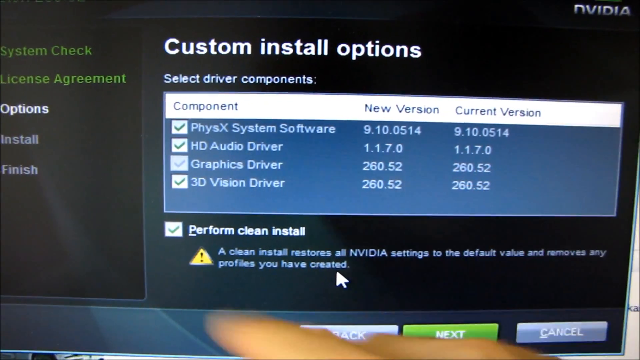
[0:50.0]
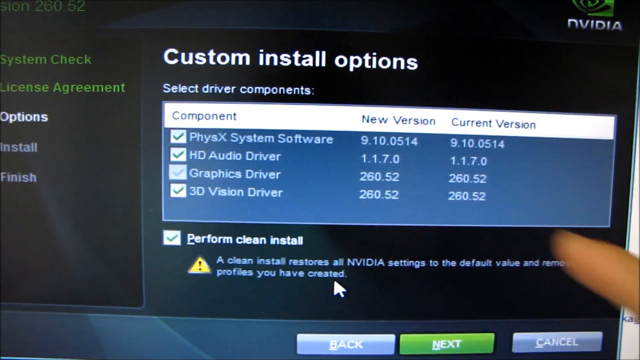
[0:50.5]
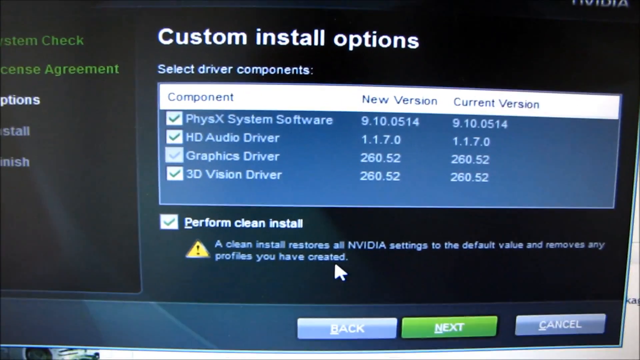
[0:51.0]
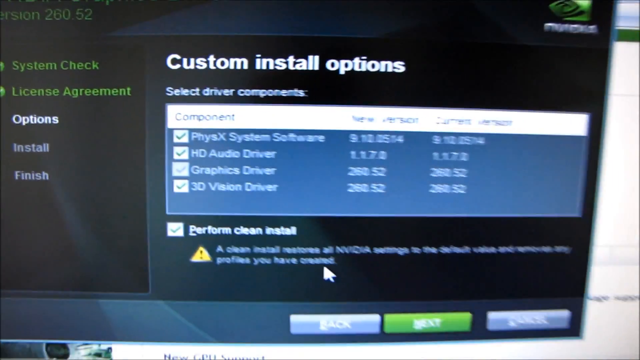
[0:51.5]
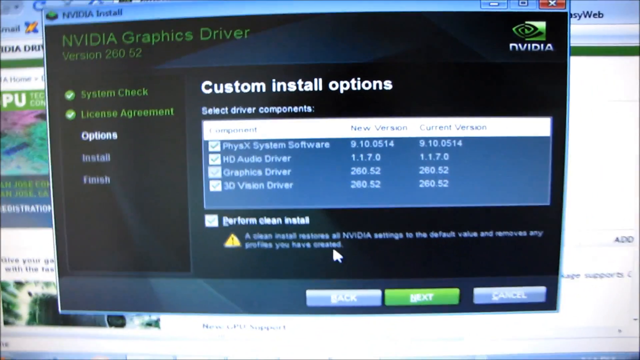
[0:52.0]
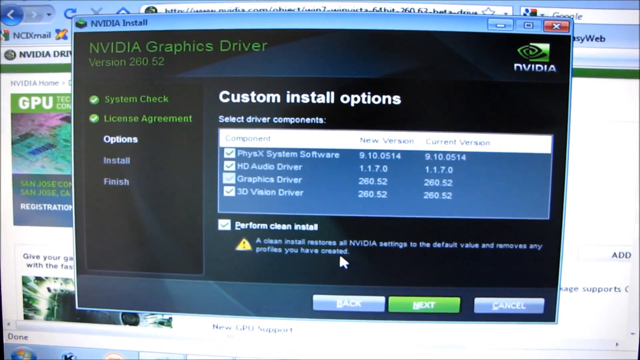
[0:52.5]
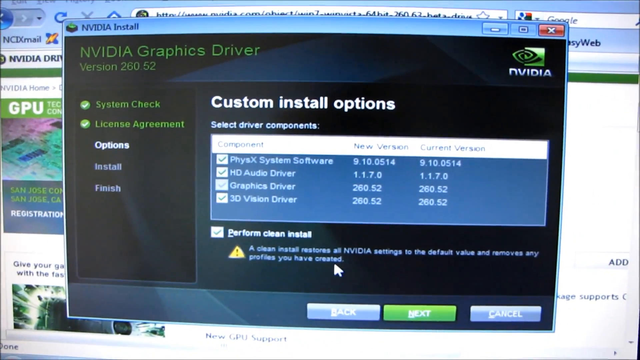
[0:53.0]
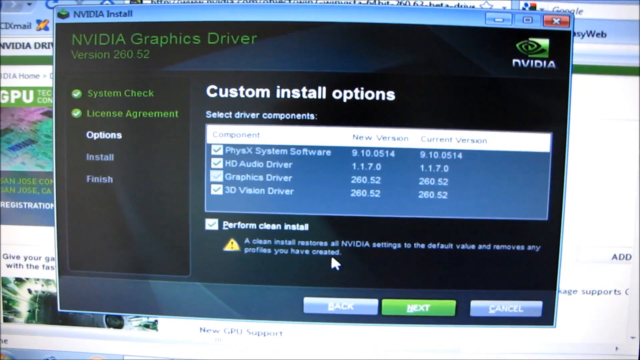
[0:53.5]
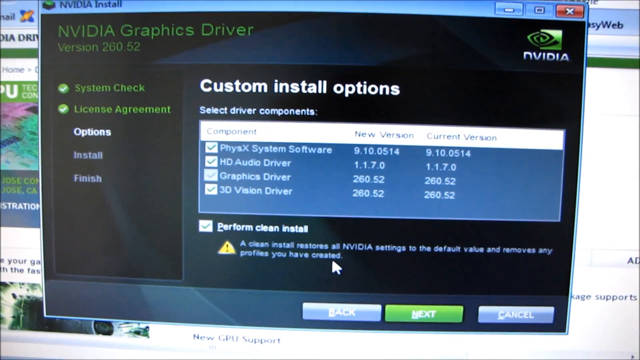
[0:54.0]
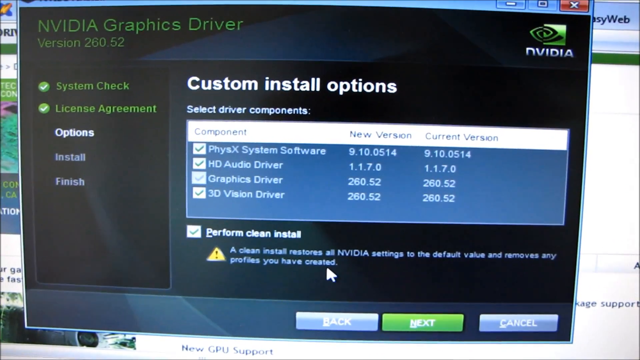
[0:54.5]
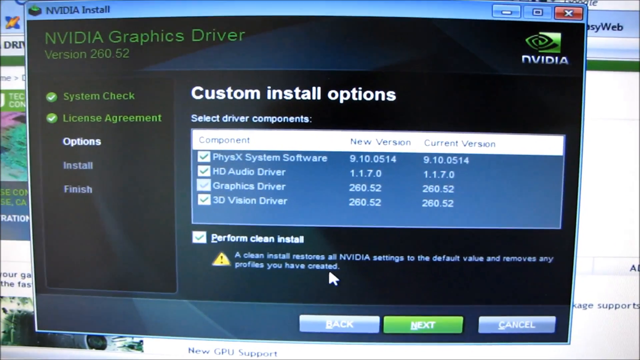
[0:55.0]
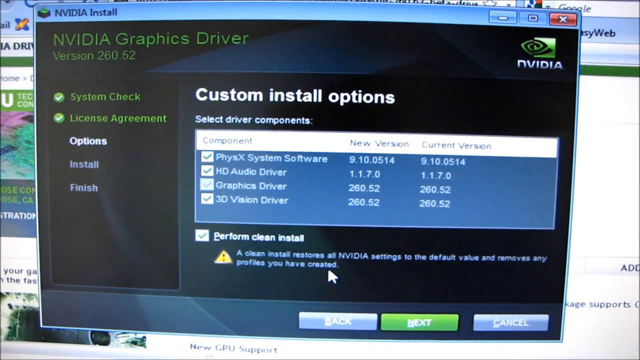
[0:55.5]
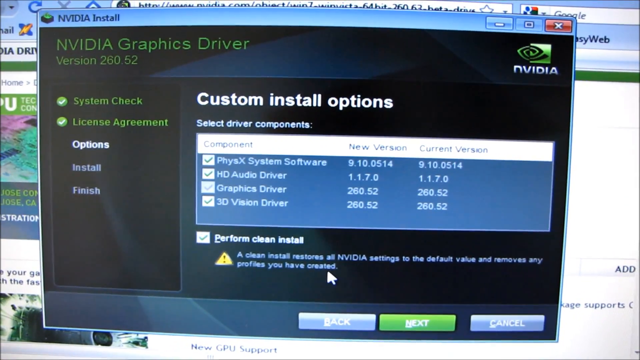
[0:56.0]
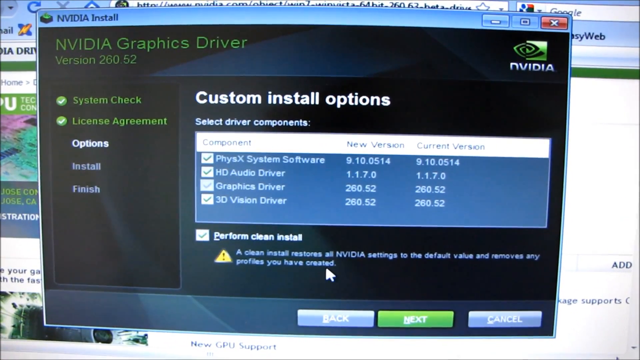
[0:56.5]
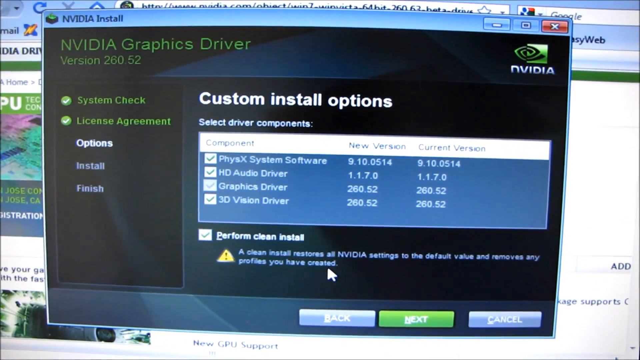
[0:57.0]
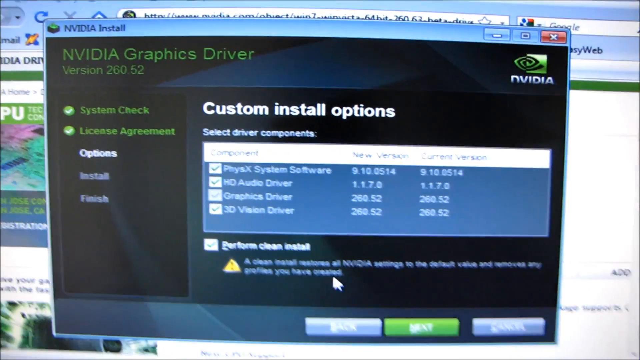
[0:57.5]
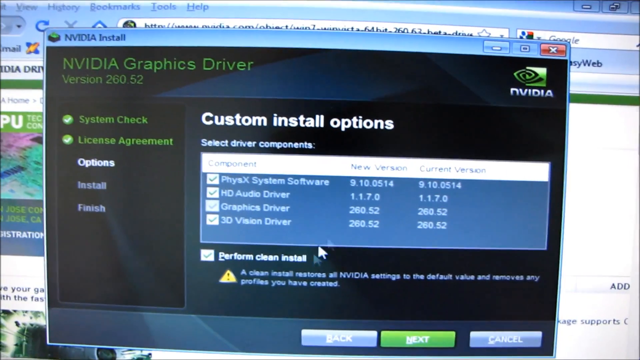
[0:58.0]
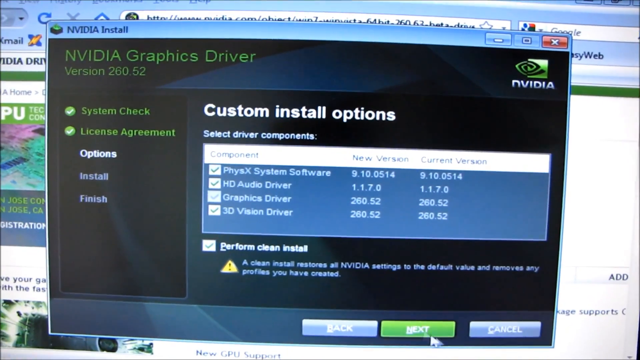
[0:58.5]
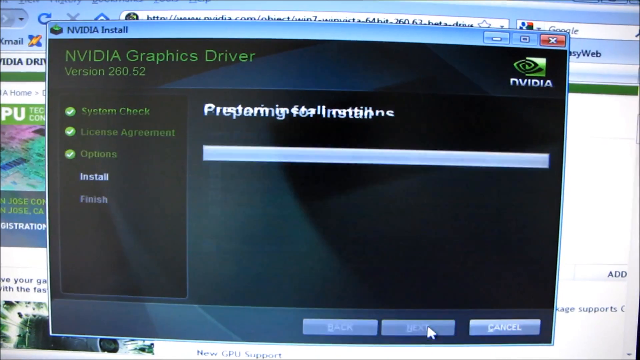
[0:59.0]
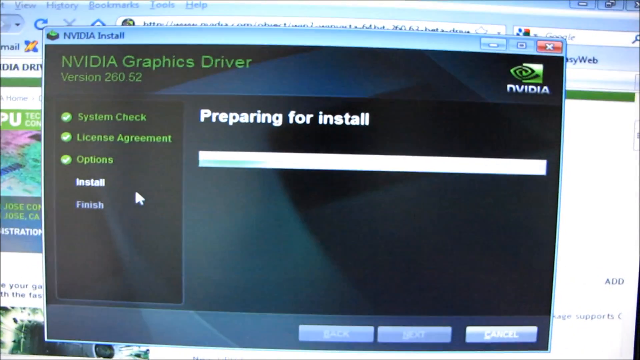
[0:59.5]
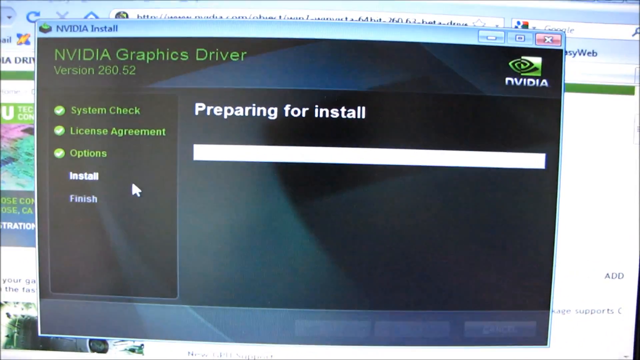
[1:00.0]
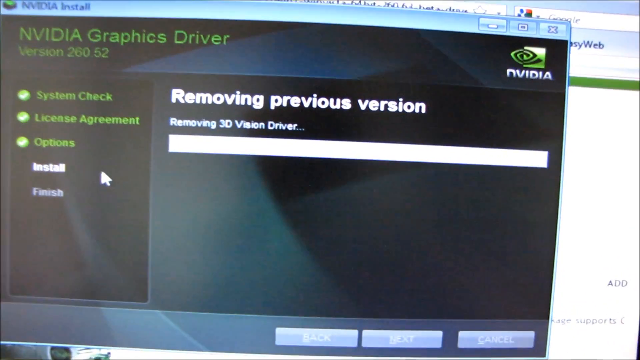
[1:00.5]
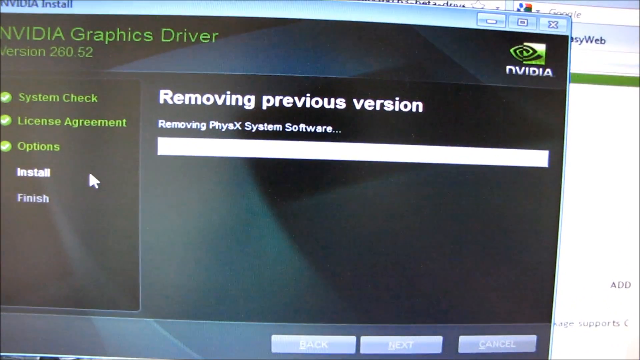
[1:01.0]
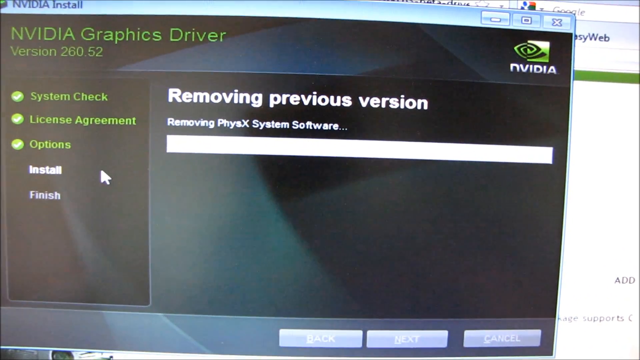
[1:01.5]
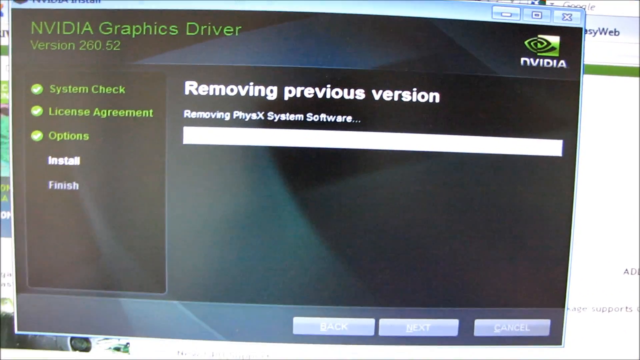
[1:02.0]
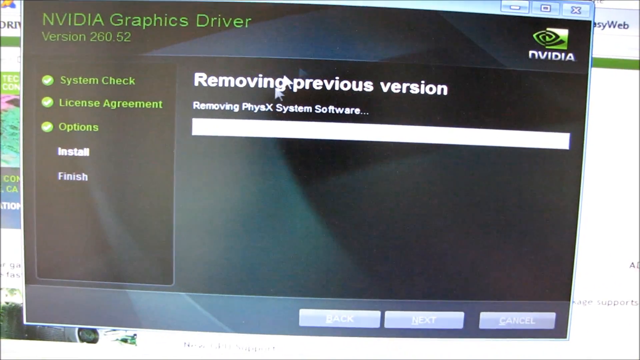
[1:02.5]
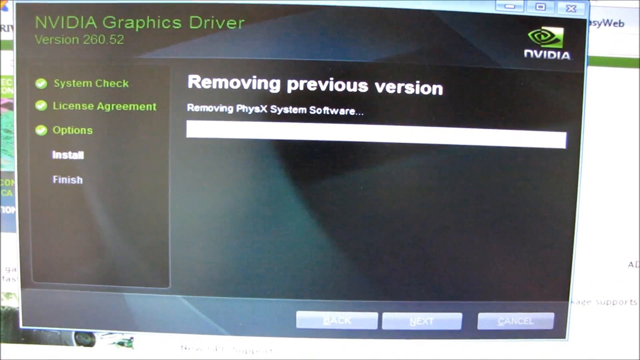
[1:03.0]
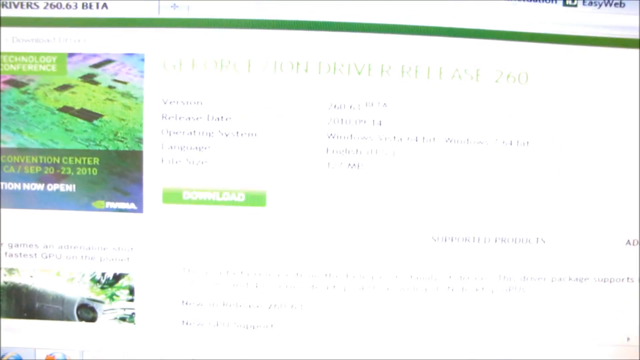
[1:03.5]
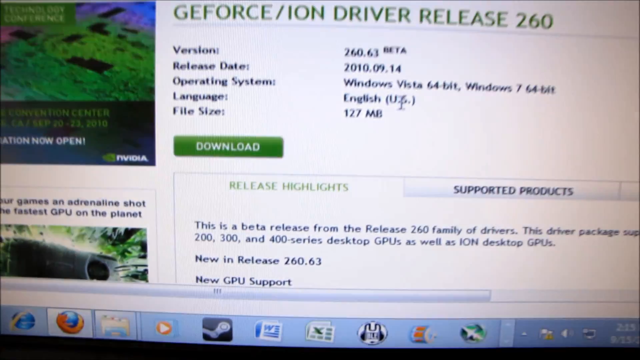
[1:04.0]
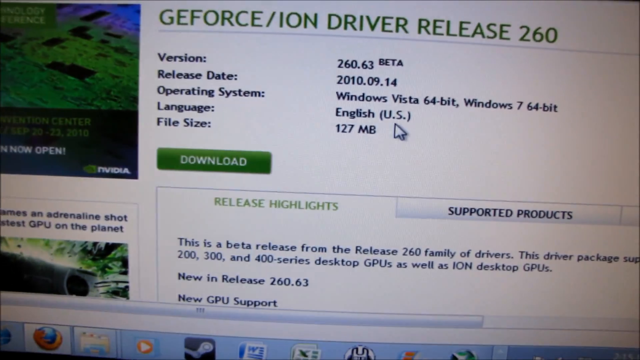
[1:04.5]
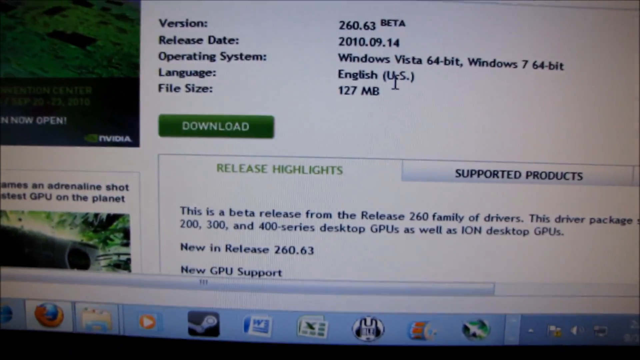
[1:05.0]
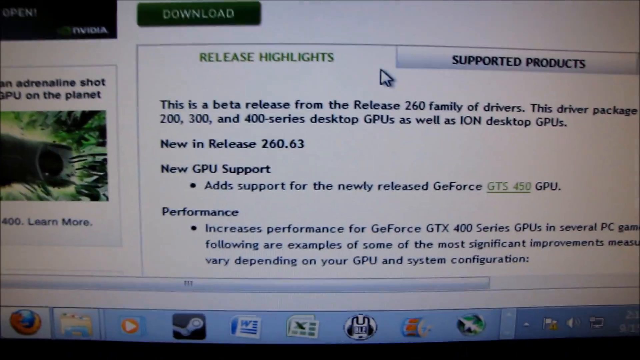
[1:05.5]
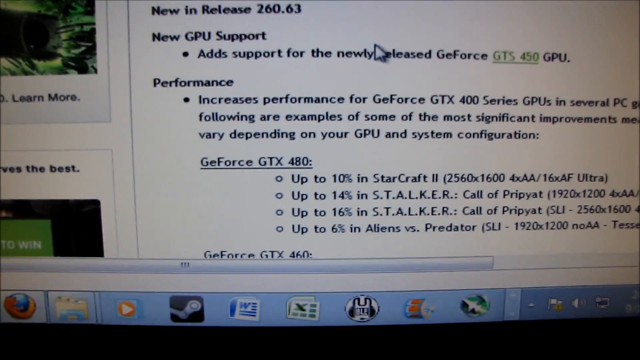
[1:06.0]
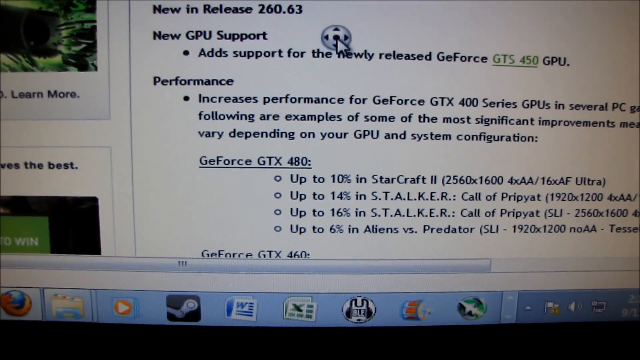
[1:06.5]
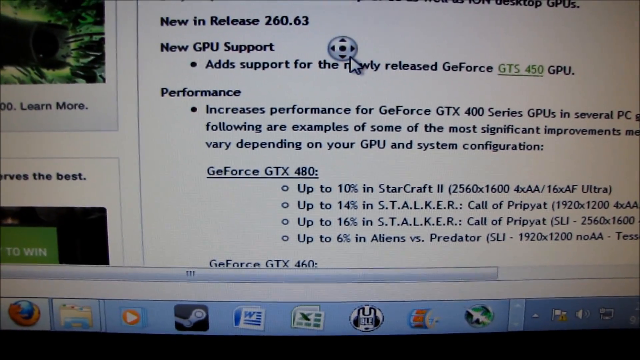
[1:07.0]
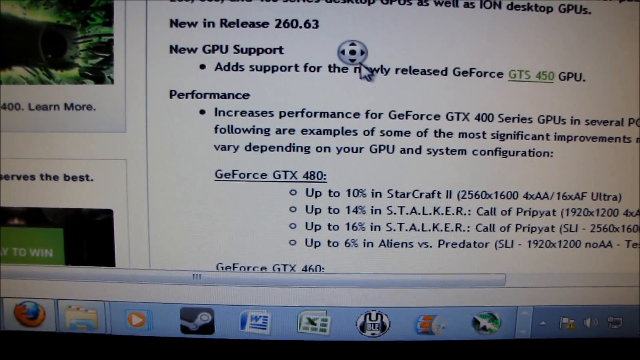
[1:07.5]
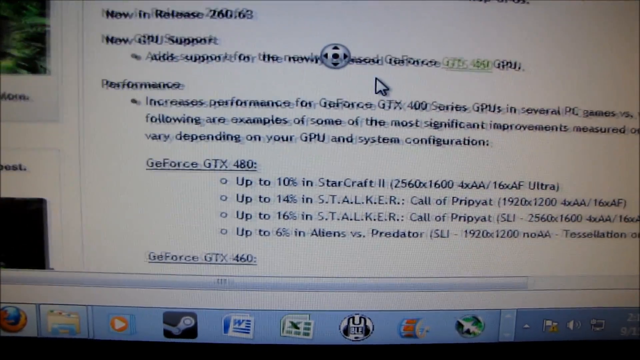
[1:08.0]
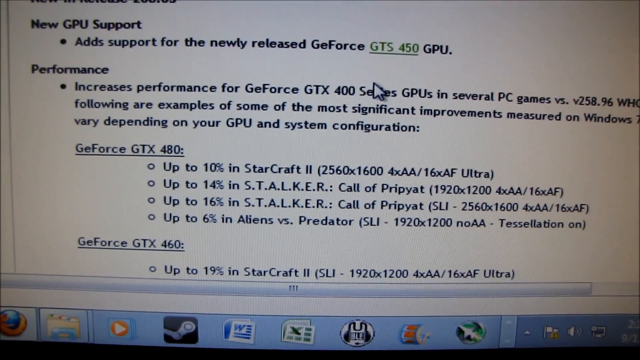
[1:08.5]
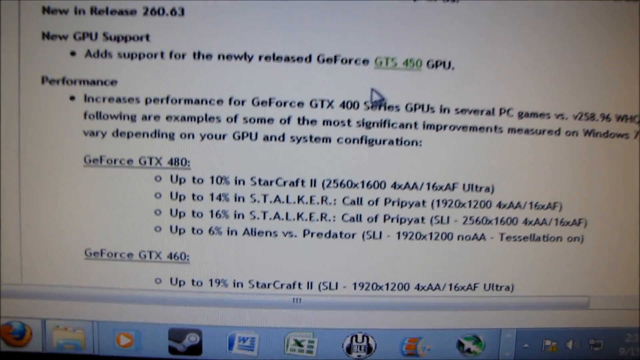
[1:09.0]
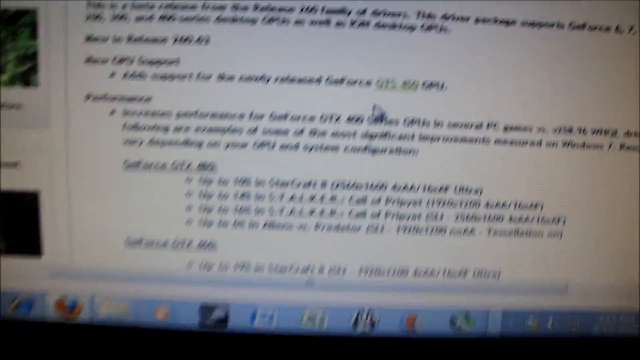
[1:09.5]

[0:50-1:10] The user's right hand gestures toward the custom install options window. The camera zooms out, no longer focused on the four options. He moves the mouse cursor to the next button and clicks it, bringing up a page that says "preparing for install" with a progress bar that is all white at first and then moves quickly. The installer moves on to removing the previous version, removing the PhysX system software. An NVIDIA logo is in the top right: a green square with a green and black swirl pattern above the white letters "NVIDIA". After a moment of installing, the user minimizes the installation screen and turns to what appears to be the website from which he downloaded the exe file, a page full of text. He zooms in, scrolls down a bit and scrolls to the right. The shot ends abruptly before it is clear which part of the text he is highlighting.